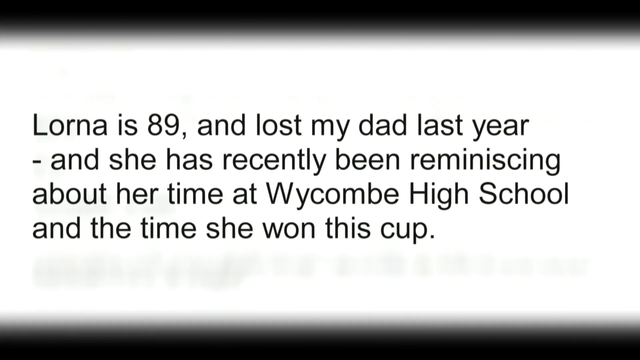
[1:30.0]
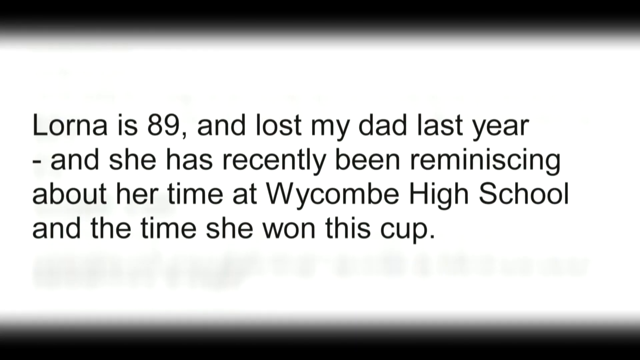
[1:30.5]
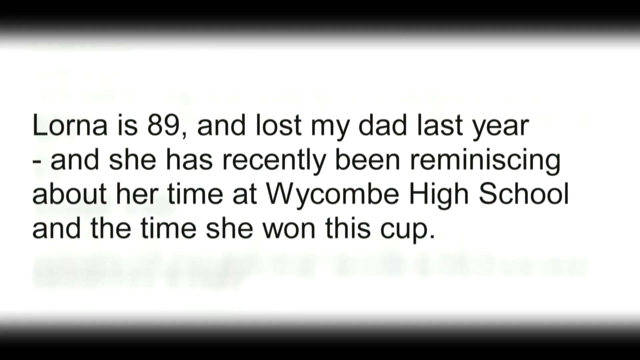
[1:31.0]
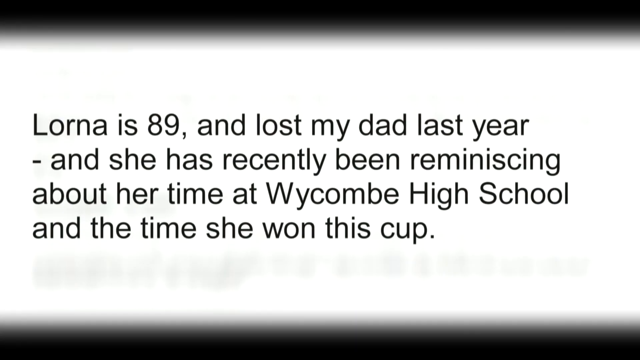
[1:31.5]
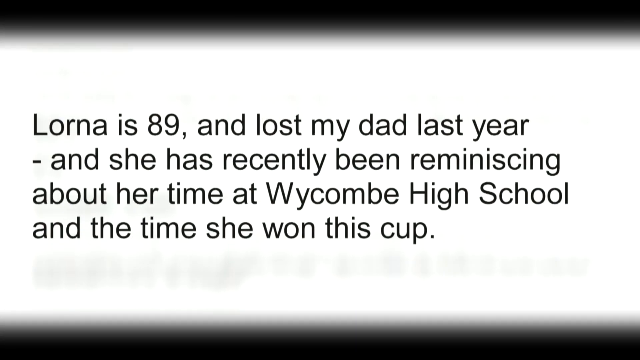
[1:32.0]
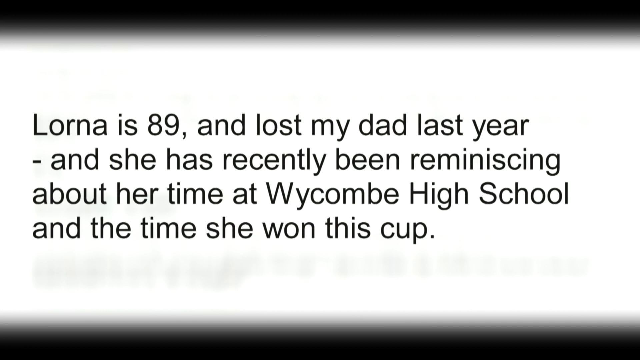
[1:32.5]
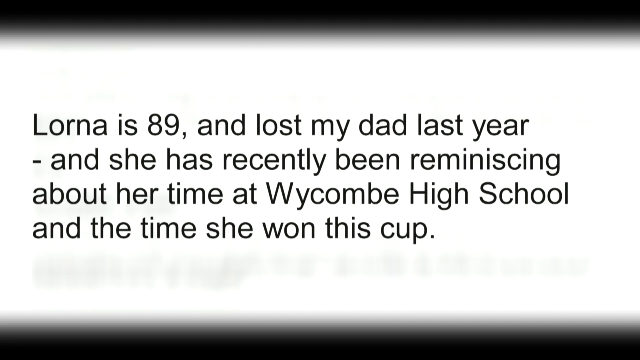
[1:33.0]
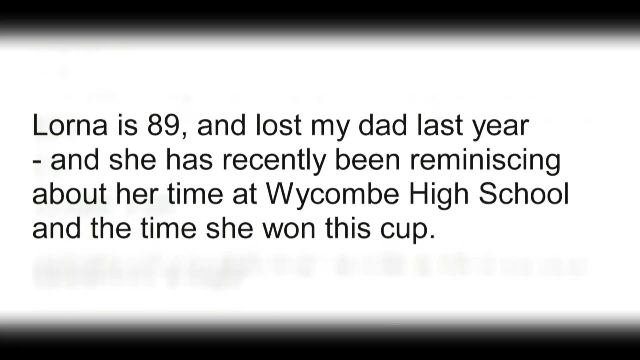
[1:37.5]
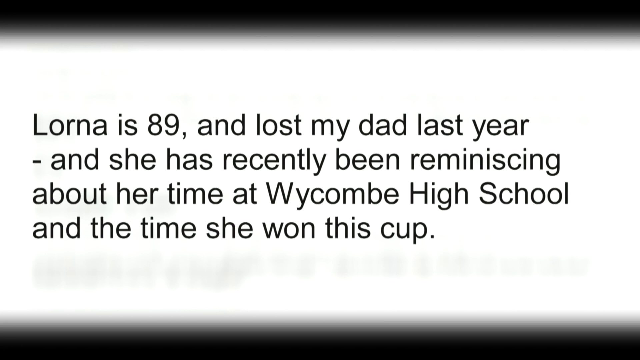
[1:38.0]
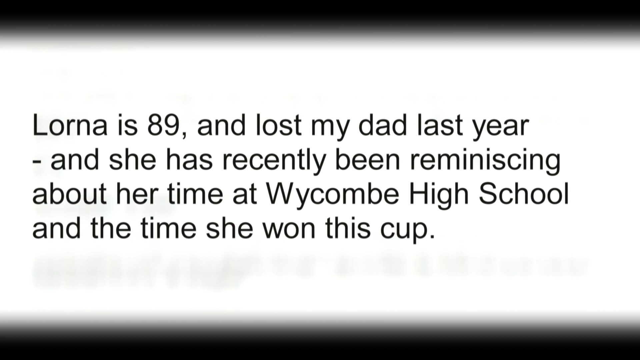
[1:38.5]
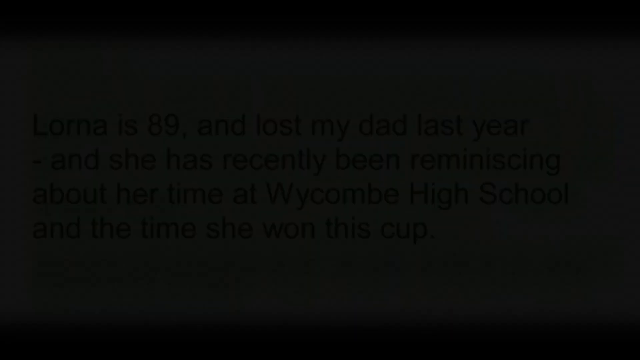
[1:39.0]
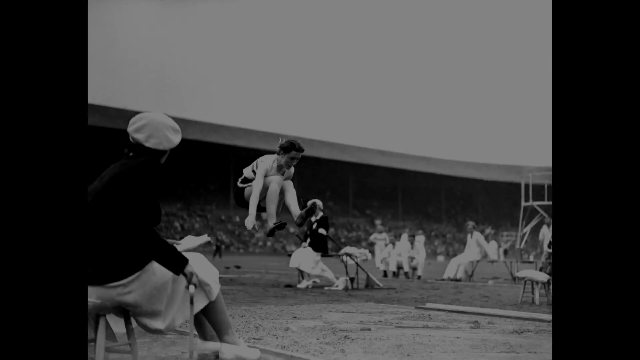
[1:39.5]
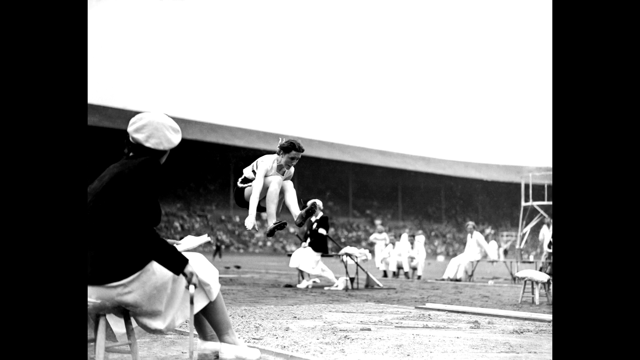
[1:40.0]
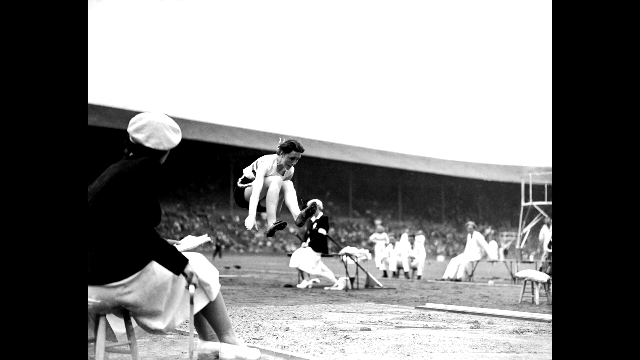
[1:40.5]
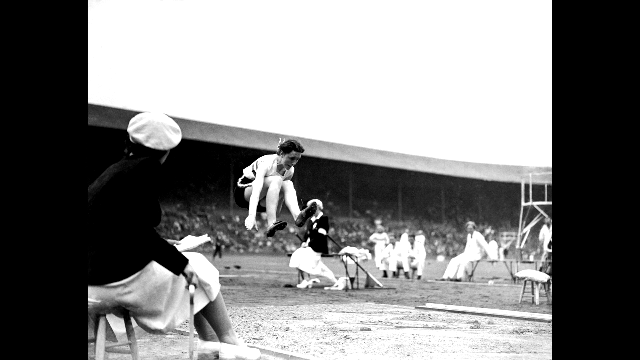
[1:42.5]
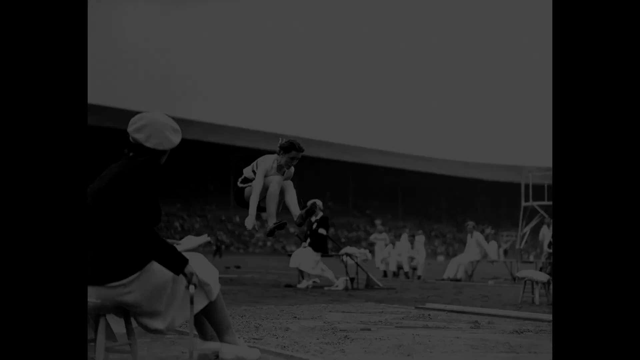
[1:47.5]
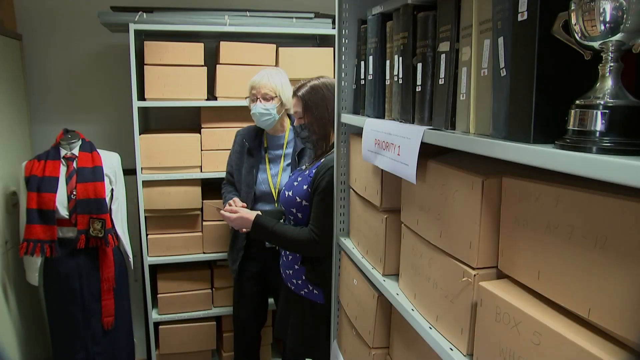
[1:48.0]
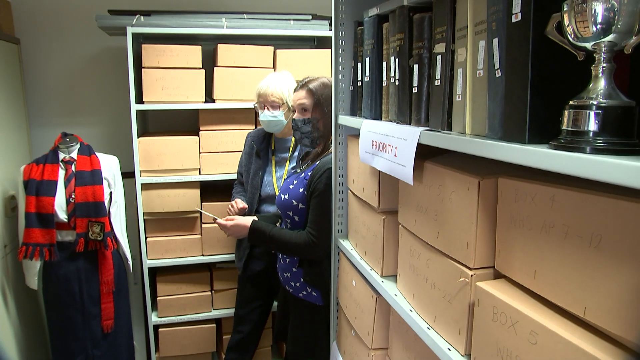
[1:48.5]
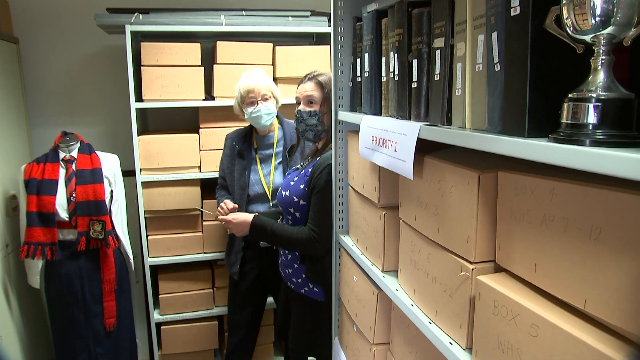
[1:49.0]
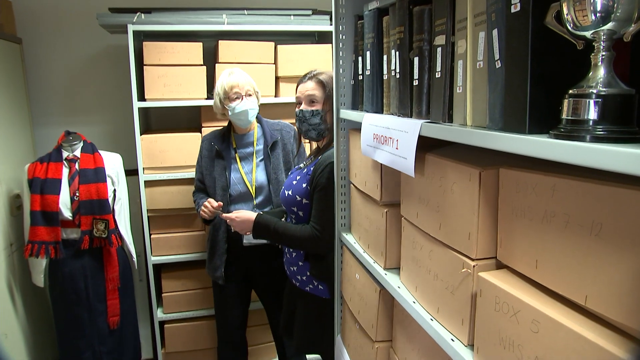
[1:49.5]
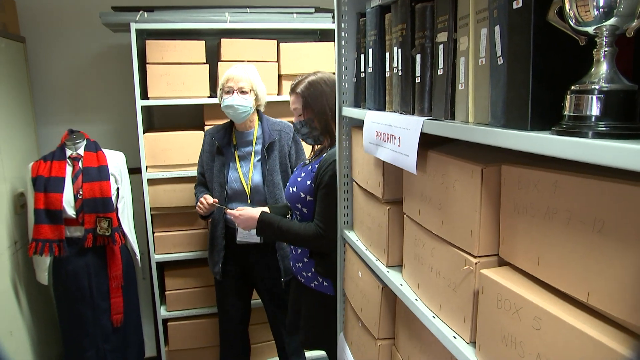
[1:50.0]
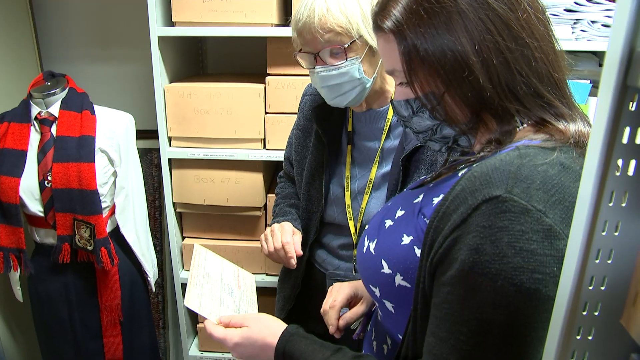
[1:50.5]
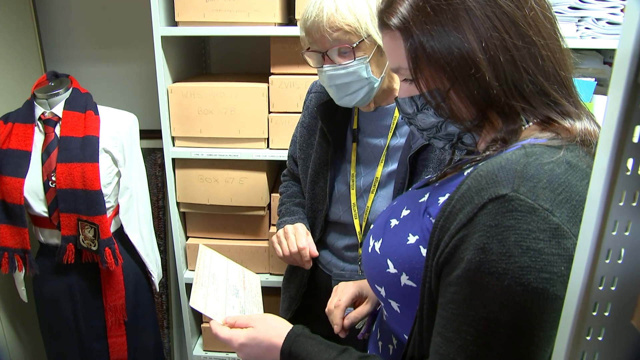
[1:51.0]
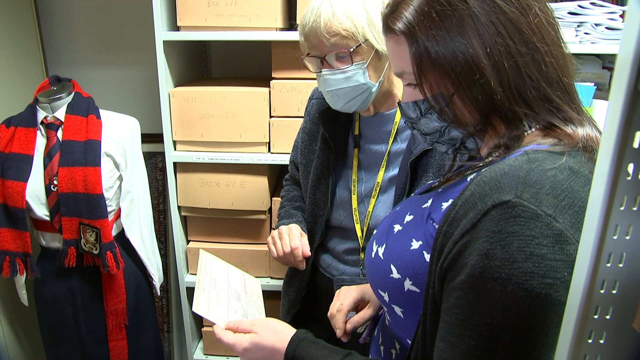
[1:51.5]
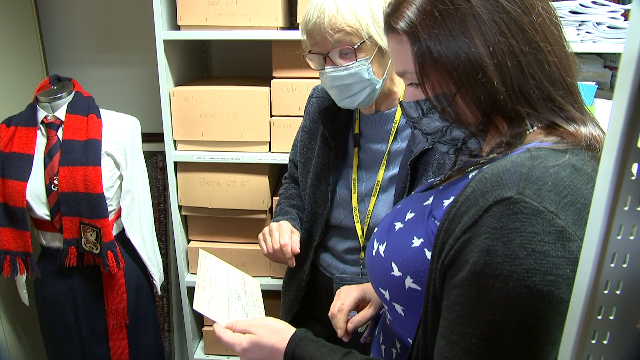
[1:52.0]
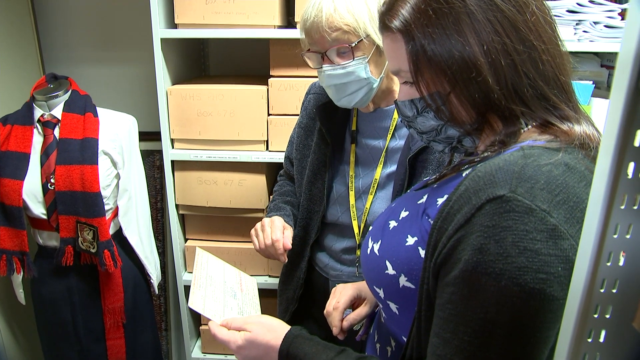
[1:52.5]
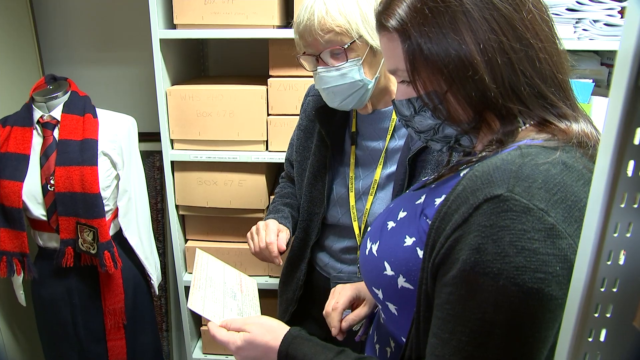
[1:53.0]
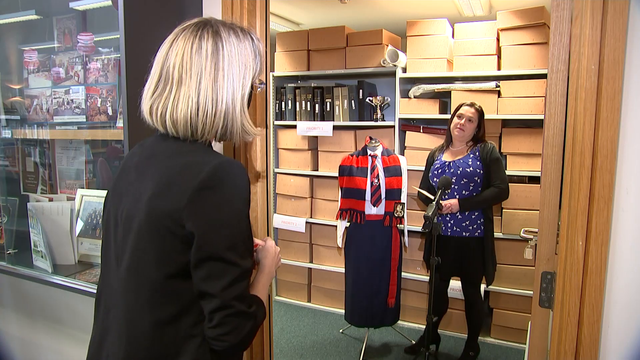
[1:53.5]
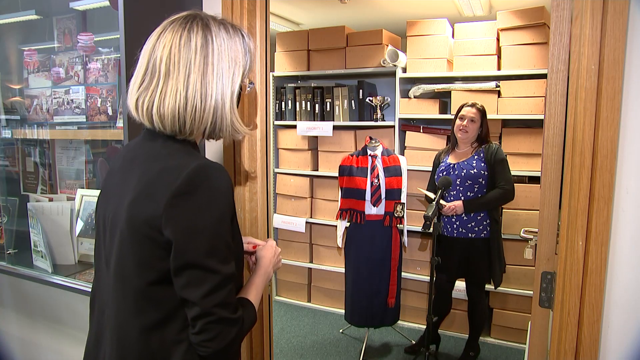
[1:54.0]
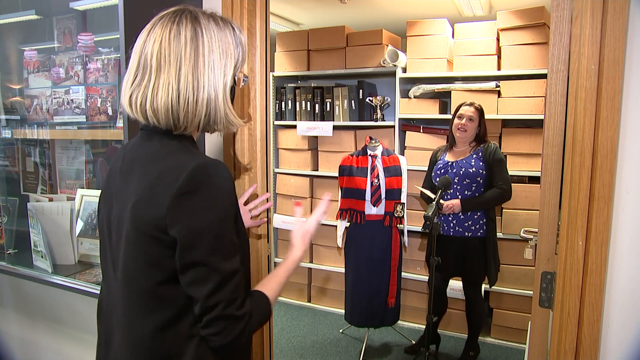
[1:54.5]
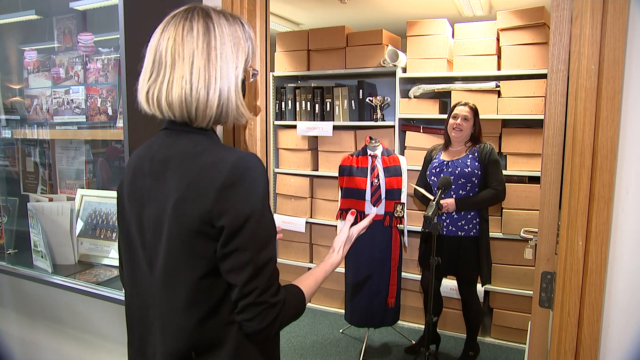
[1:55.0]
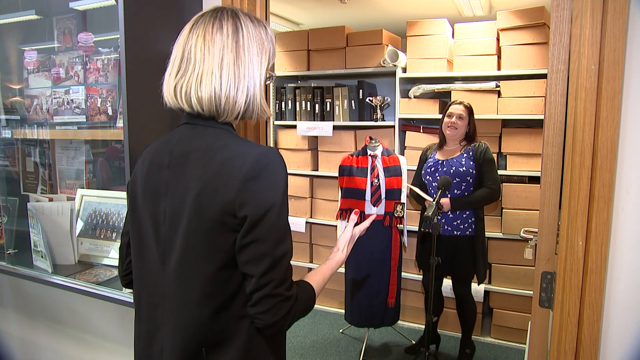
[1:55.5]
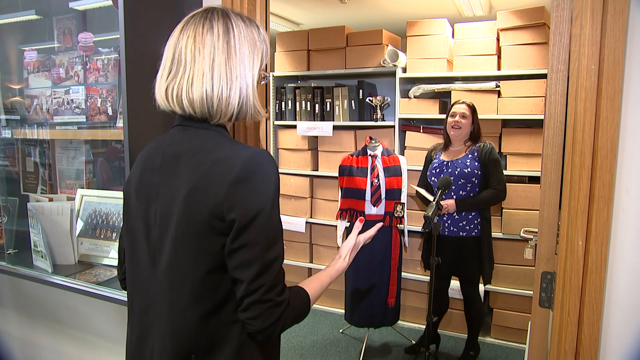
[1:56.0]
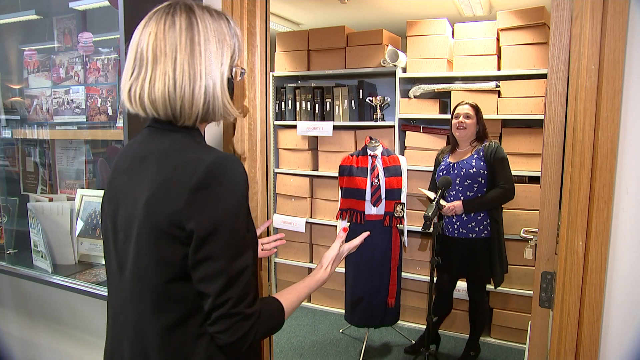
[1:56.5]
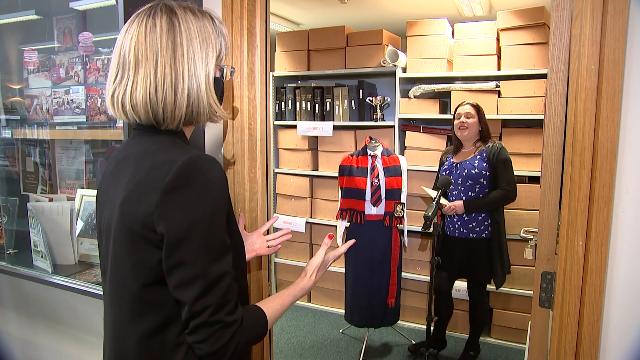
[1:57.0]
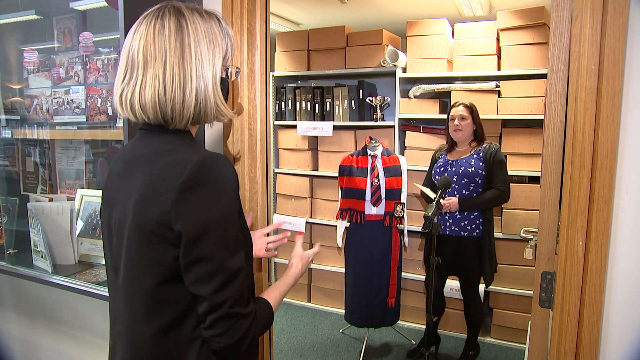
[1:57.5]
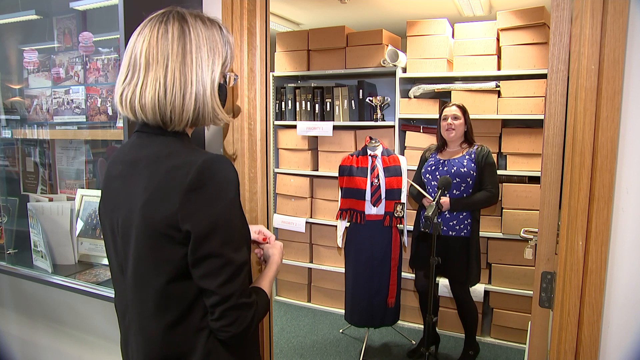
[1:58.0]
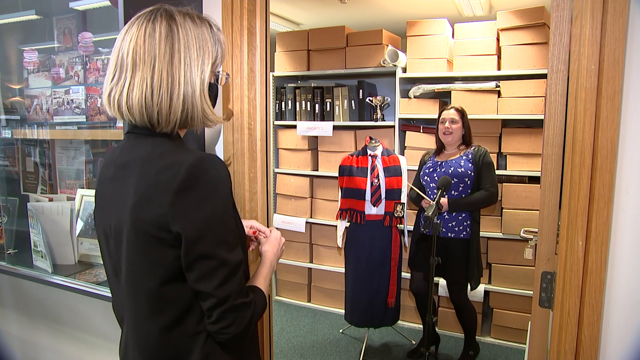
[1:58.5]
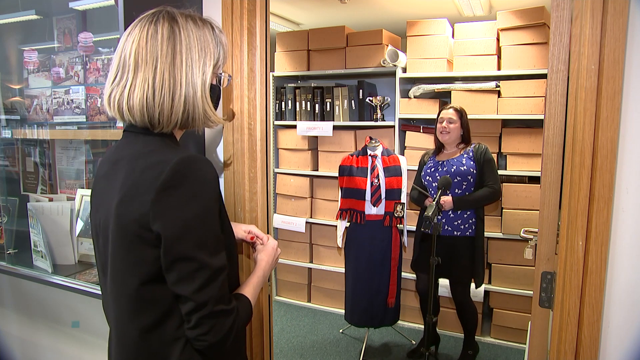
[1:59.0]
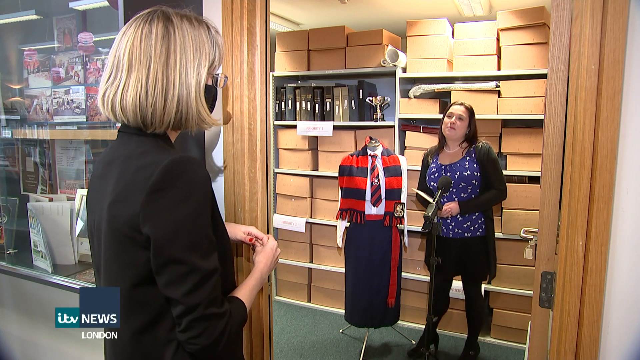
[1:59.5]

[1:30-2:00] More text continues on the screen. A black-and-white still image shows the 89-year-old woman years ago, winning the high jump; she looks like she jumped pretty high.